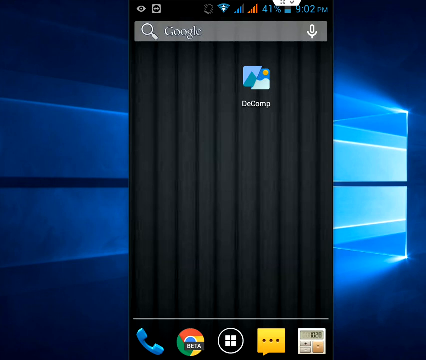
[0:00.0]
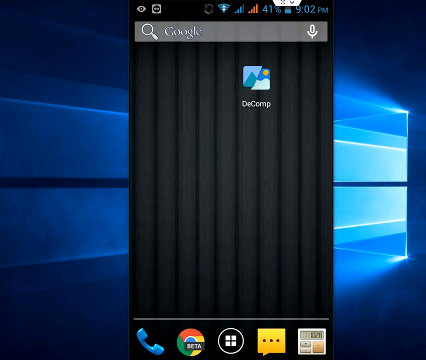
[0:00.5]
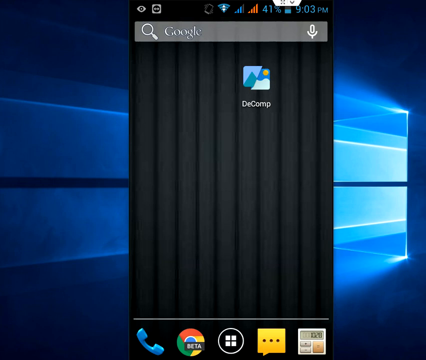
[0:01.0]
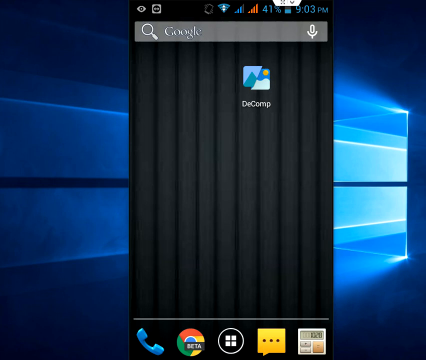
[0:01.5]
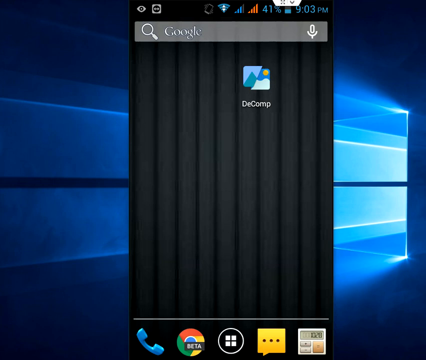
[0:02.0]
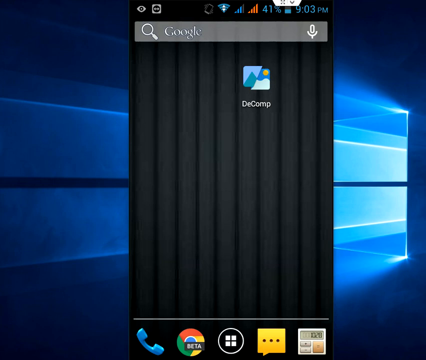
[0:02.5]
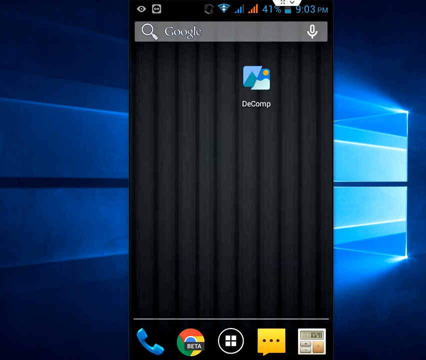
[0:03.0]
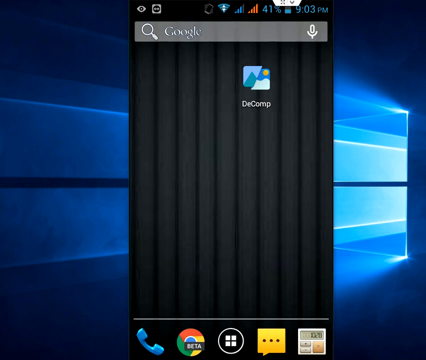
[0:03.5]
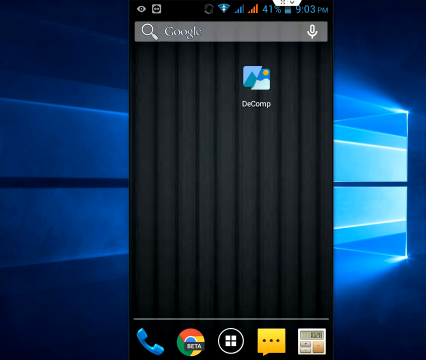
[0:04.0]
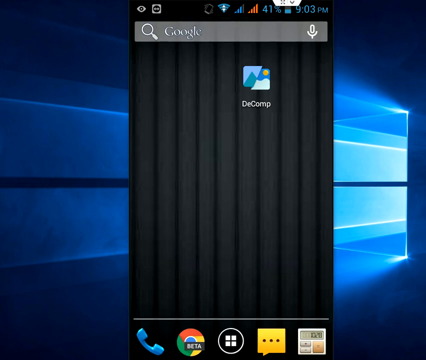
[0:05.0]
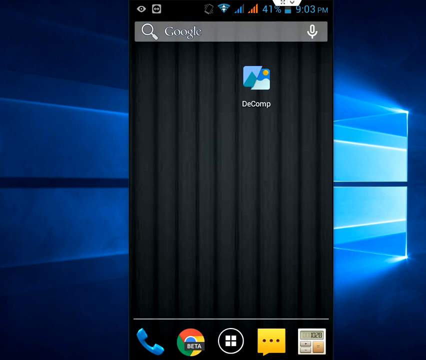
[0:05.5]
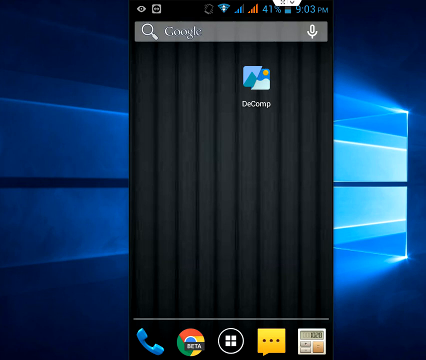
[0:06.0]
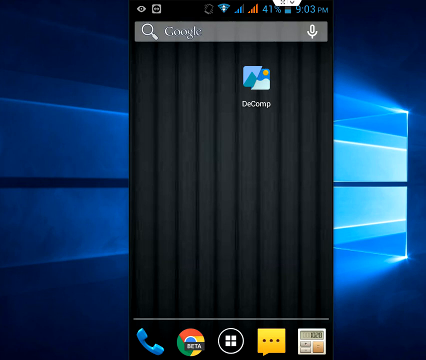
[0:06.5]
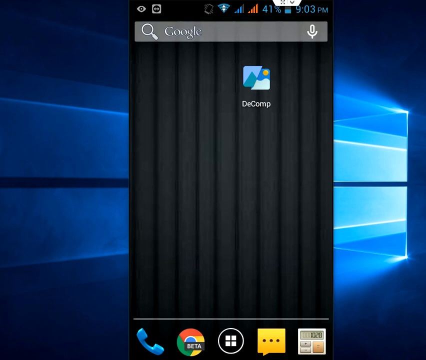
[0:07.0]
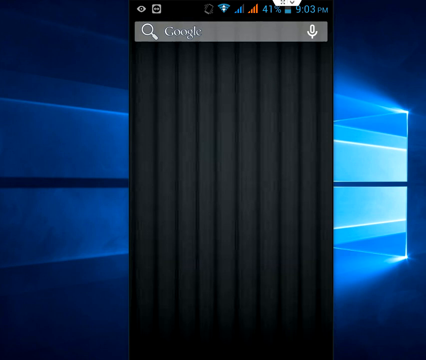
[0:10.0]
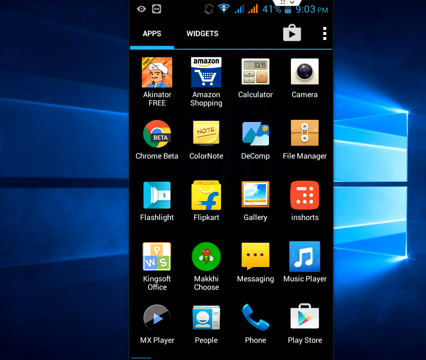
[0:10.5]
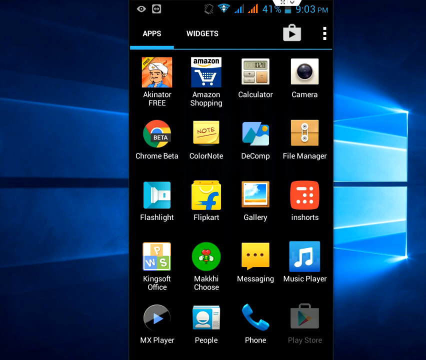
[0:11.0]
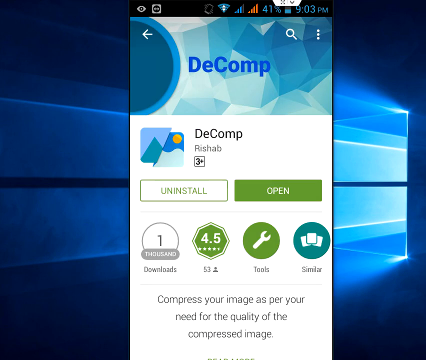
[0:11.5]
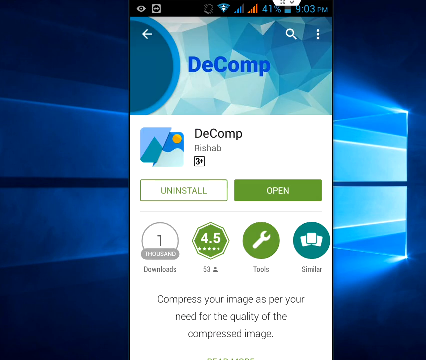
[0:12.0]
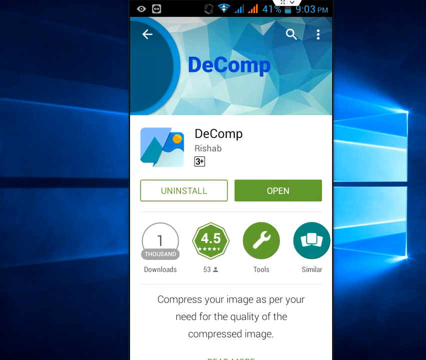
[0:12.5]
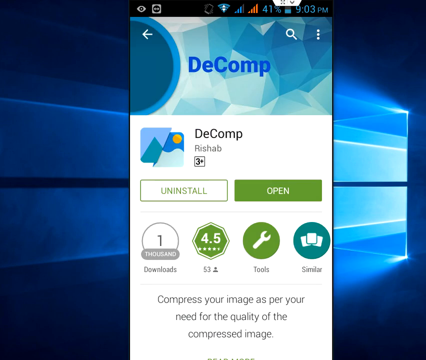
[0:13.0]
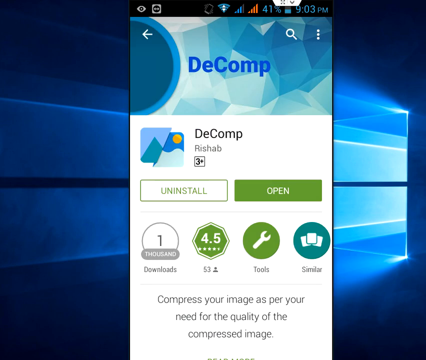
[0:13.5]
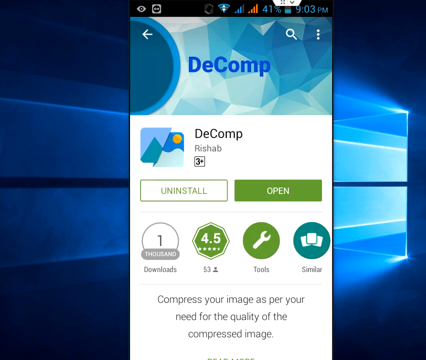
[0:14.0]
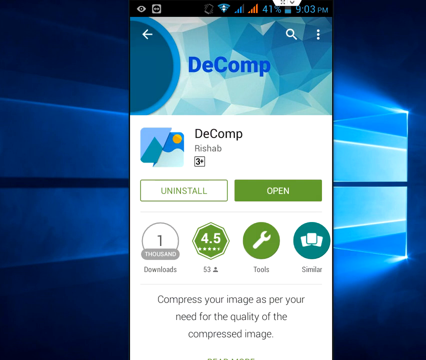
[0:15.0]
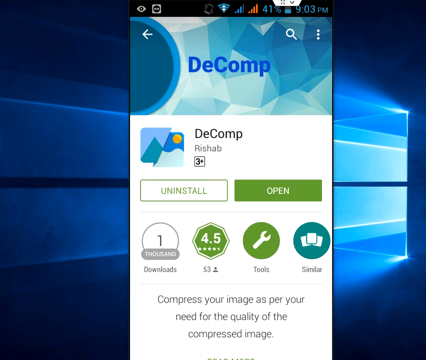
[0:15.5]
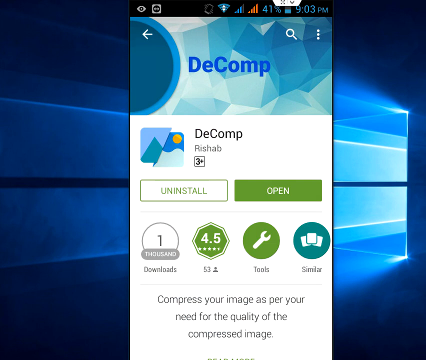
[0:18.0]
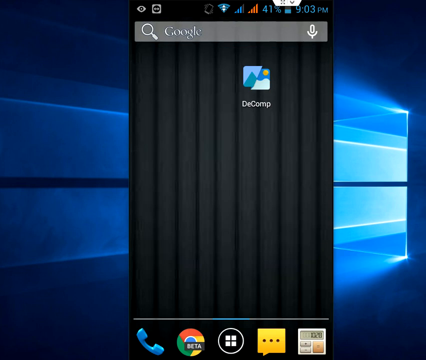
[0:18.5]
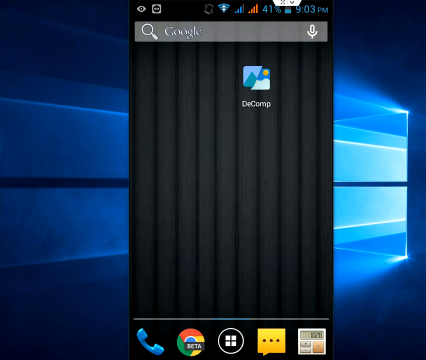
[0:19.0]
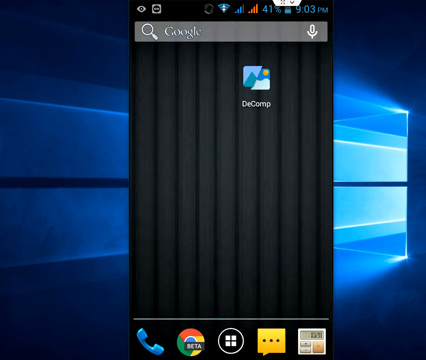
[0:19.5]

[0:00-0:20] A phone's home screen is shown; the phone seems to be an old Android phone, and the background looks like a Windows background. The user clicks on an app called Decomp, and it looks like the word "uninstall" appears, then they click out of it. Google is on the top bar with a search icon and a microphone icon. The time is 9:02 pm and the battery is at 41%. Chrome and a notes app are visible, along with signal and wifi indicators, and there is an eye icon in the top left corner.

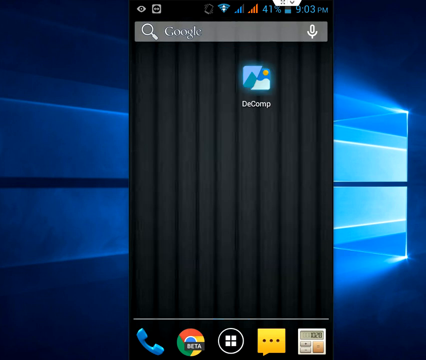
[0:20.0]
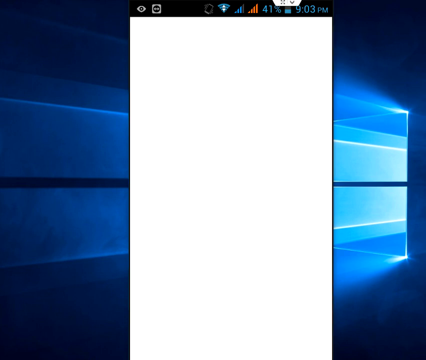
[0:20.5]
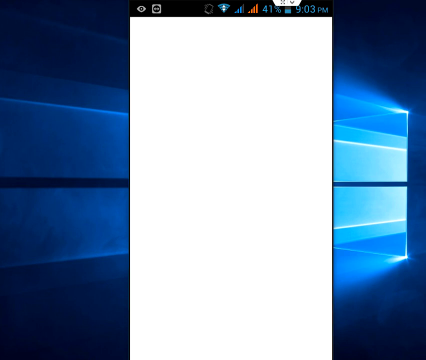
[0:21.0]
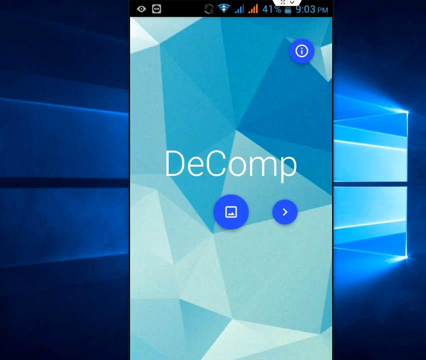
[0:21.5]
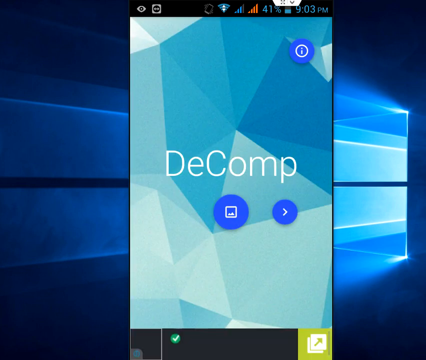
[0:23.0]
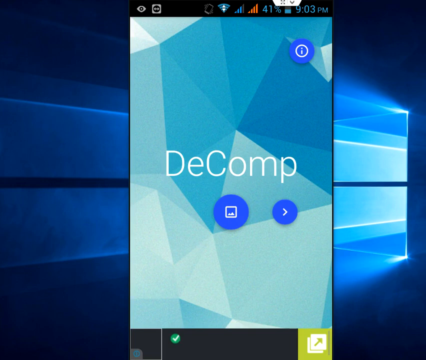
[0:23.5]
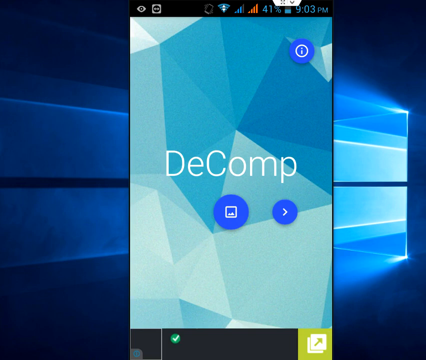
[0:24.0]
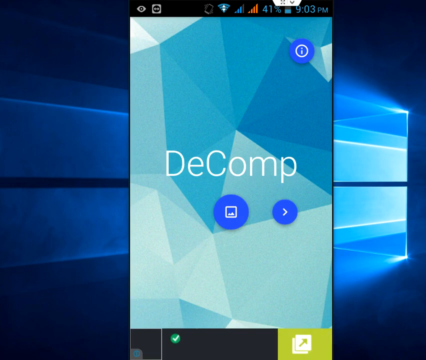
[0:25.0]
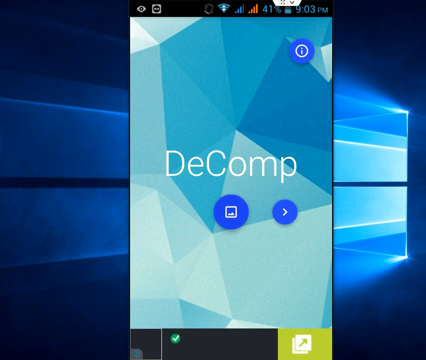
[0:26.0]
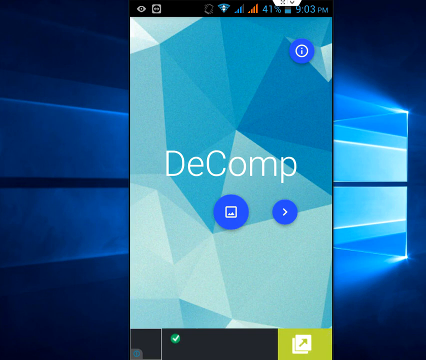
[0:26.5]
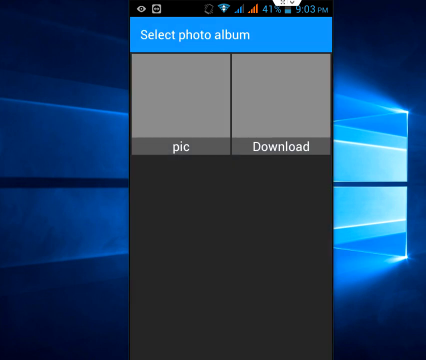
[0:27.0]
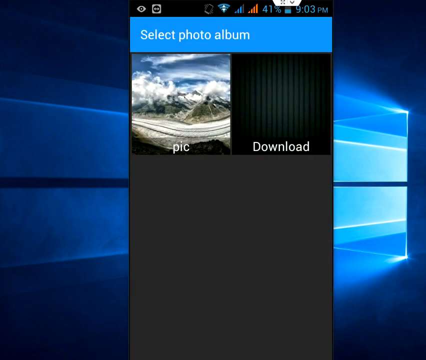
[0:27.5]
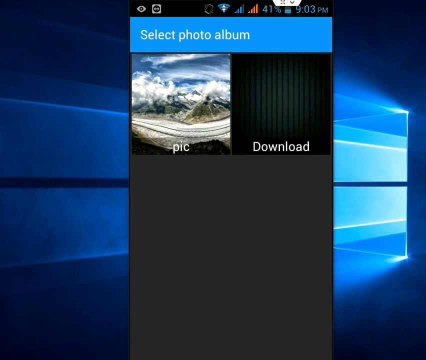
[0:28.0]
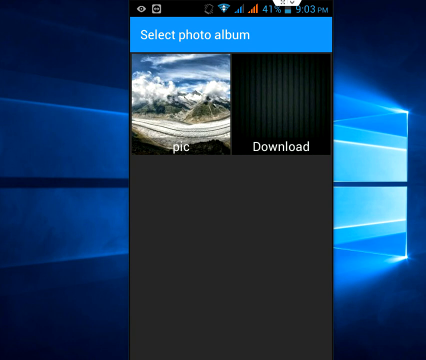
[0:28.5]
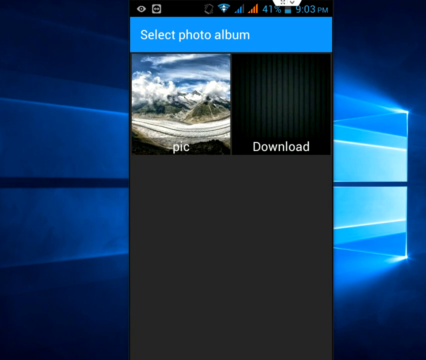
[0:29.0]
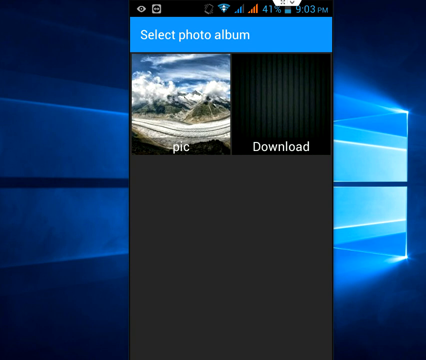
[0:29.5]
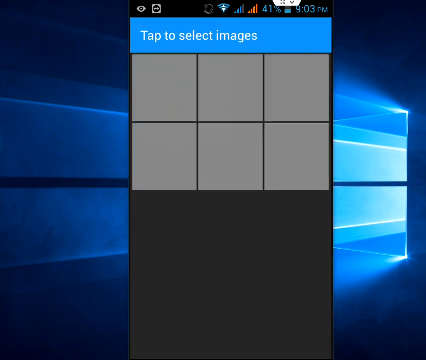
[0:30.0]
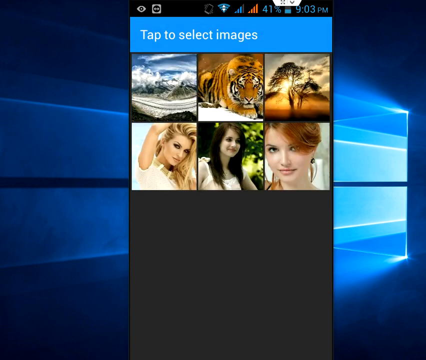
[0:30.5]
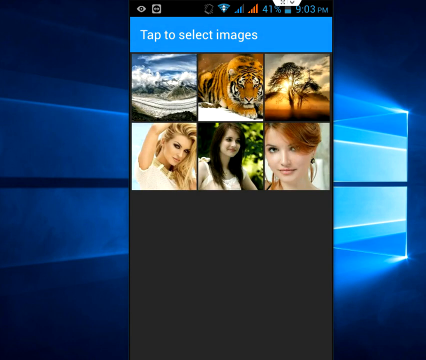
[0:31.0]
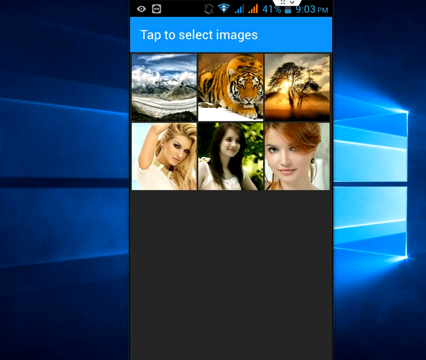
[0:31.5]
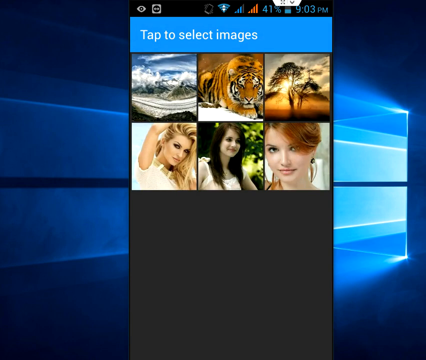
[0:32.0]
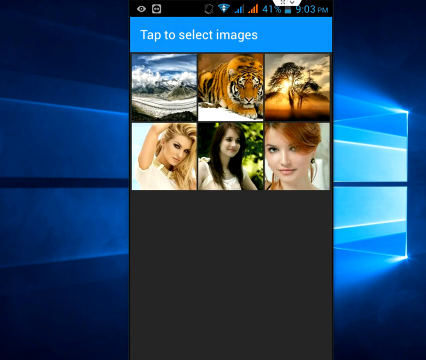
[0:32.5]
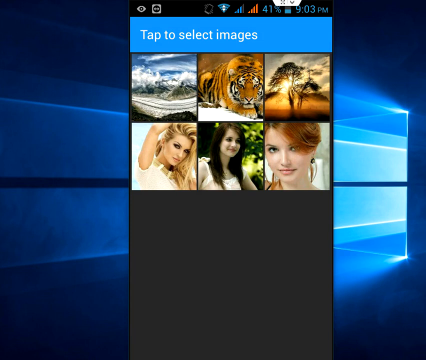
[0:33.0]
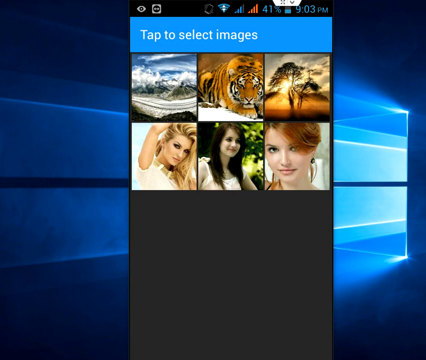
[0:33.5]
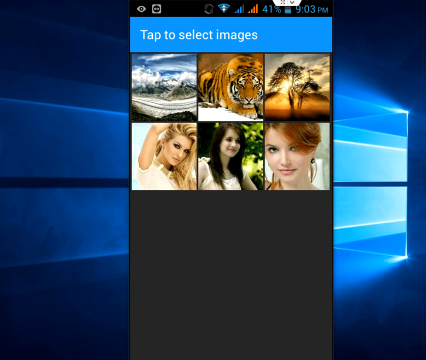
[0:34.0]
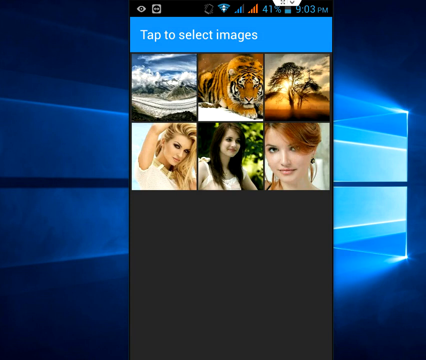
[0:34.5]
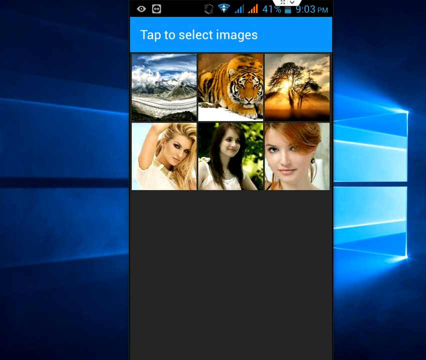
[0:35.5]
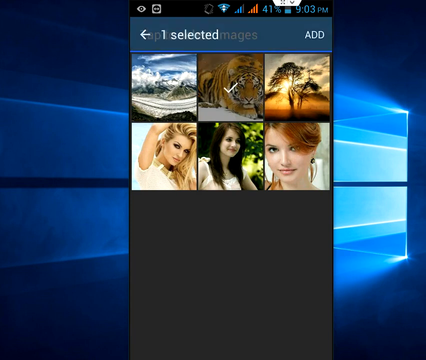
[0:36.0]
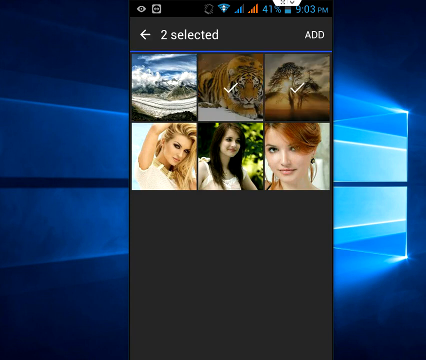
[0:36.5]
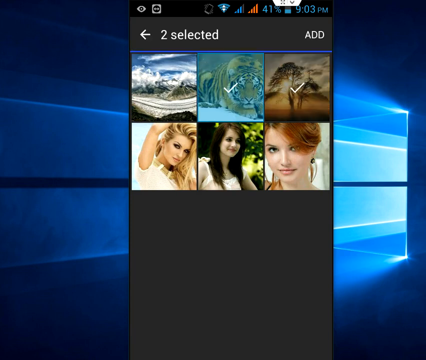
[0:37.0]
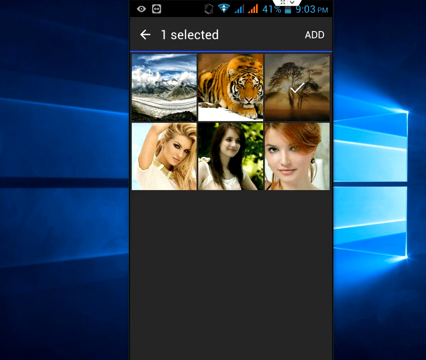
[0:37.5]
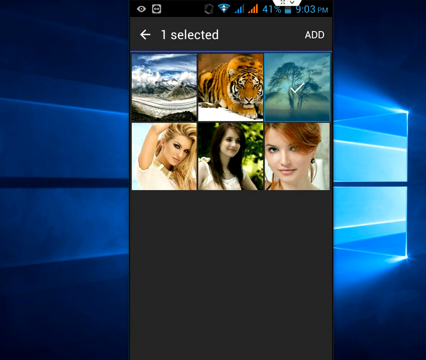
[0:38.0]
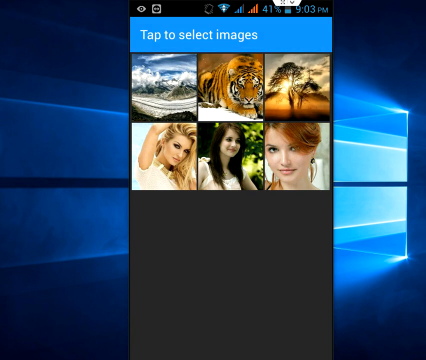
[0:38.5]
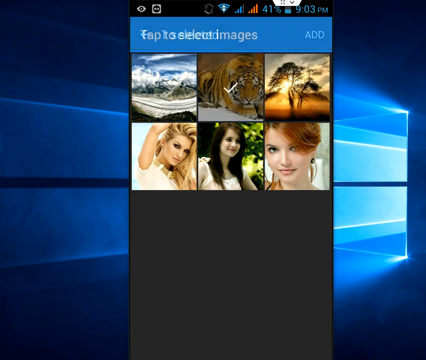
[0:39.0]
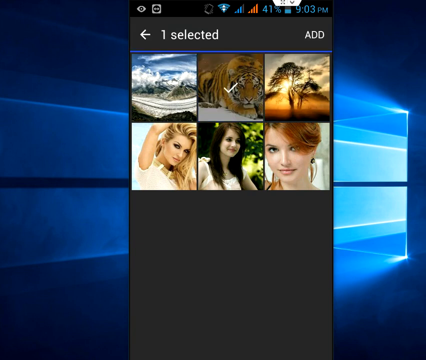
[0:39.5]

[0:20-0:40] Decomp is clicked again, and this time no install option appears. The app asks the user to select images. The selection count changes from two selected to one, to zero, and back to one, with a picture of a lion. The user clicks off Decomp, then returns to the app, where no images are selected yet, and clicks images on and off. In the app there is a photo icon; clicking it shows older photos that don't seem related to each other: landscape, a lion, a safari, and blue pictures of women at the bottom. The time is now 9:03 and the battery is still at 41%, on what seems to be the same old phone.